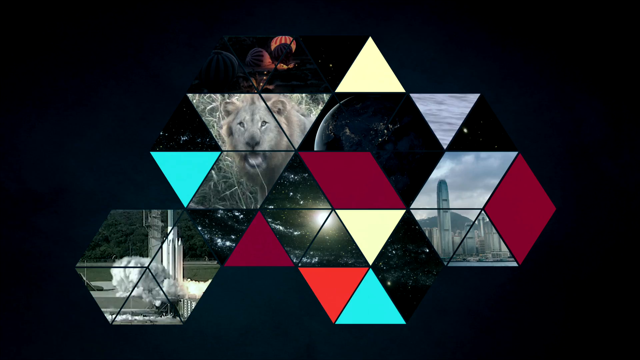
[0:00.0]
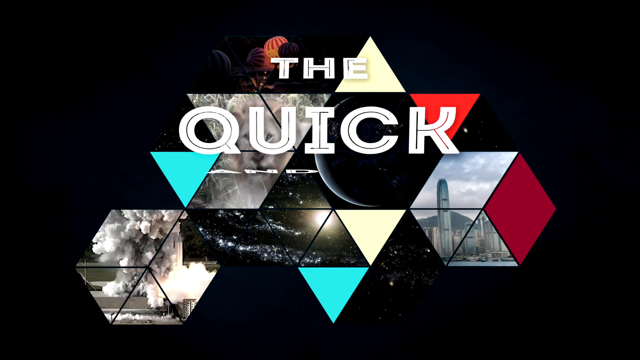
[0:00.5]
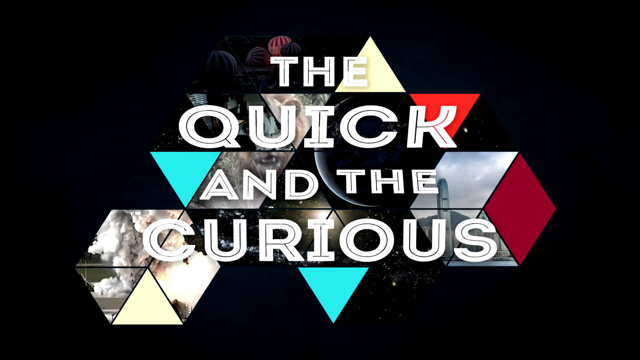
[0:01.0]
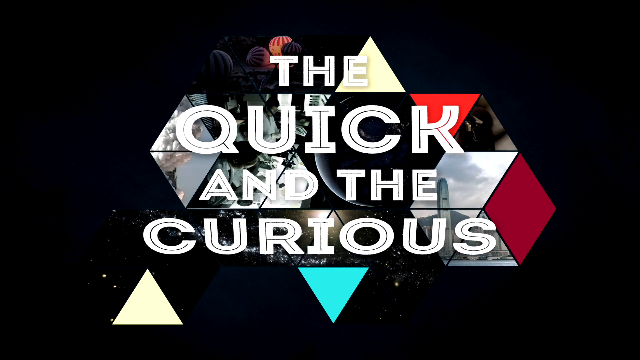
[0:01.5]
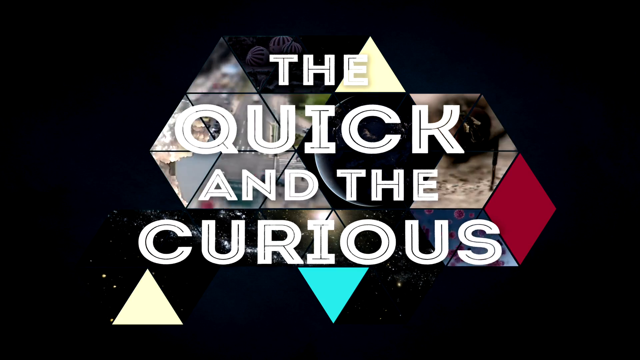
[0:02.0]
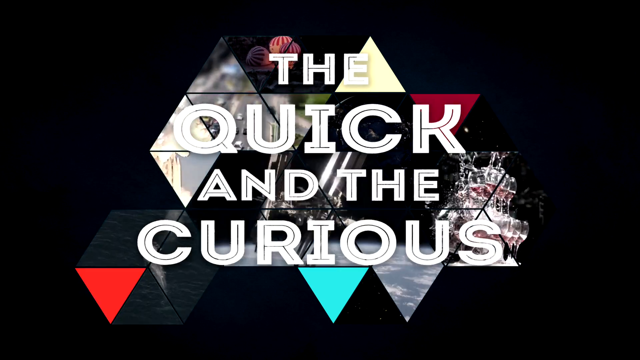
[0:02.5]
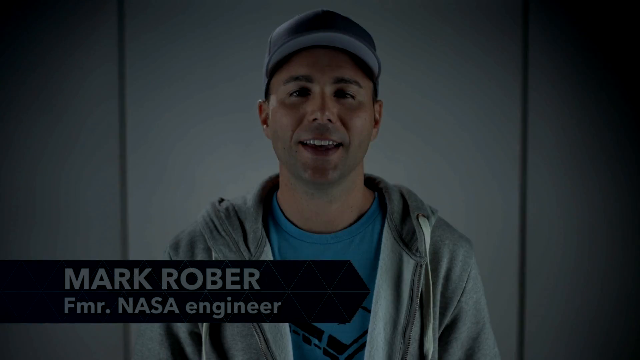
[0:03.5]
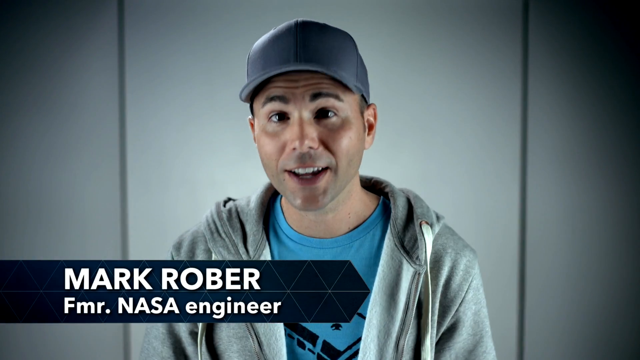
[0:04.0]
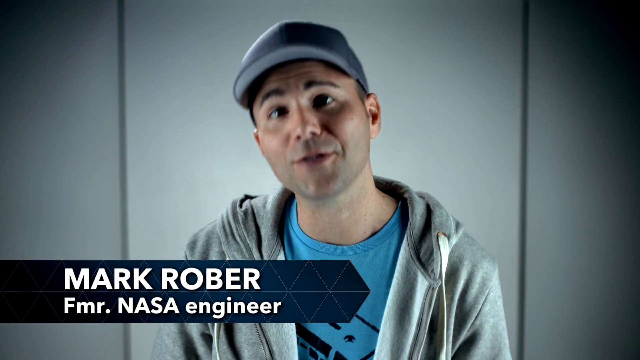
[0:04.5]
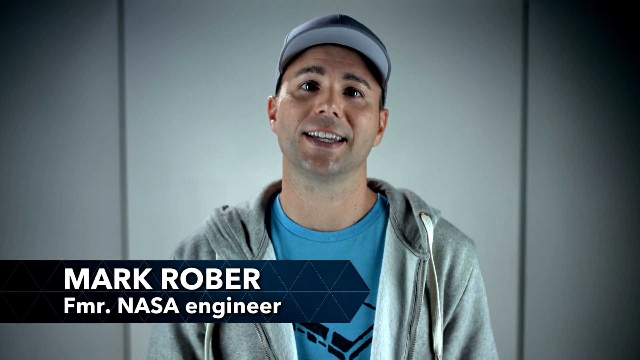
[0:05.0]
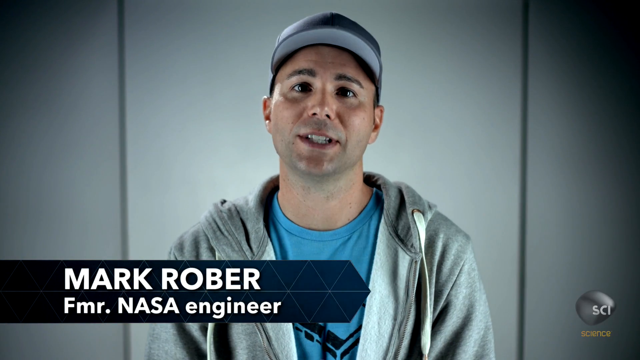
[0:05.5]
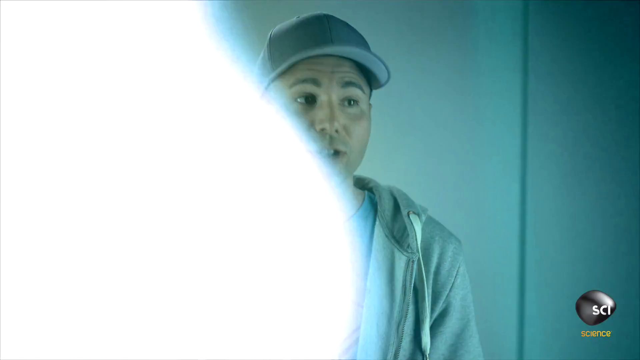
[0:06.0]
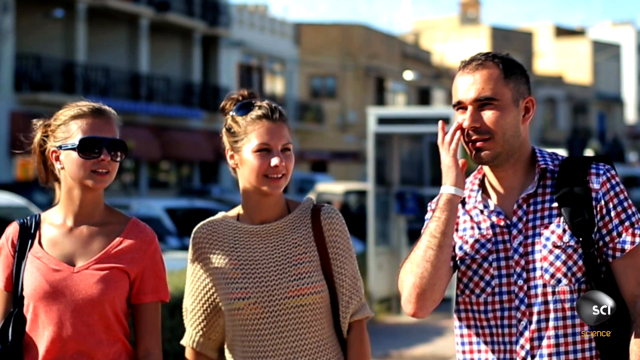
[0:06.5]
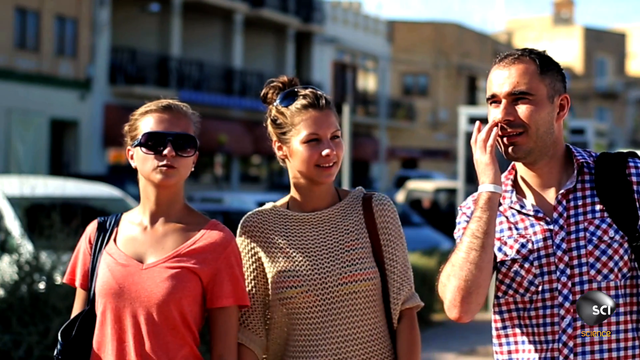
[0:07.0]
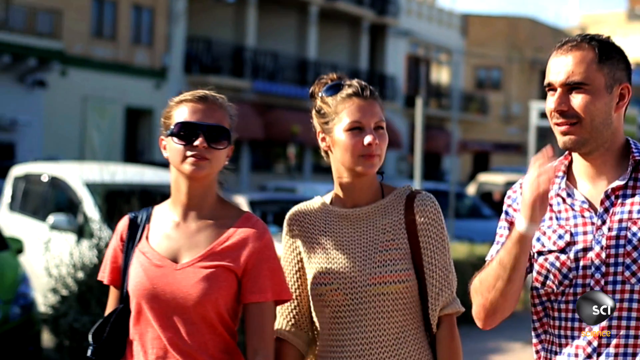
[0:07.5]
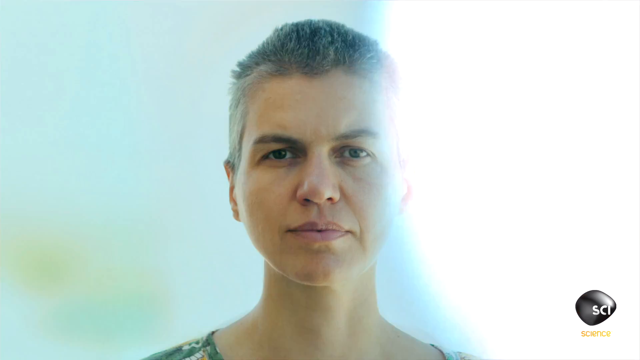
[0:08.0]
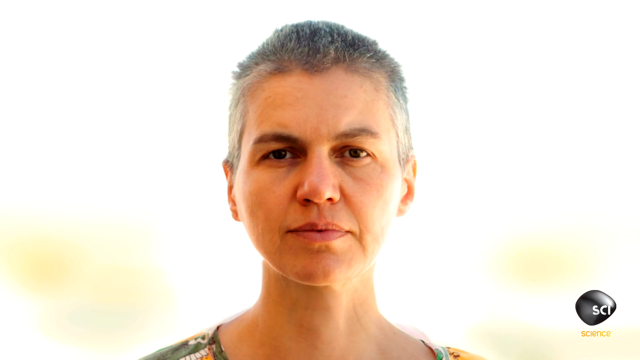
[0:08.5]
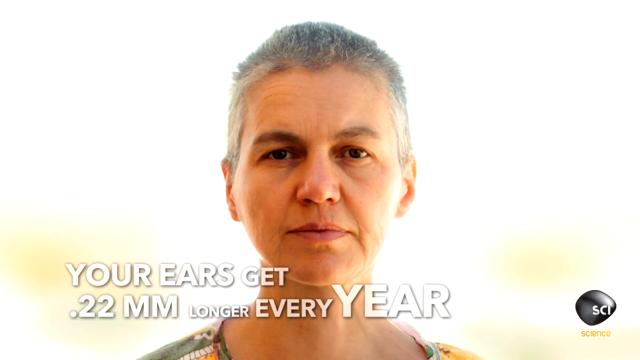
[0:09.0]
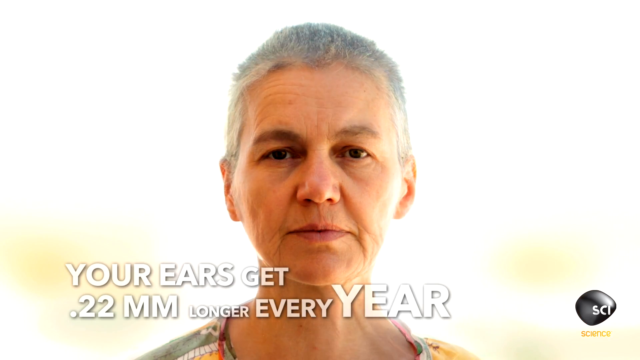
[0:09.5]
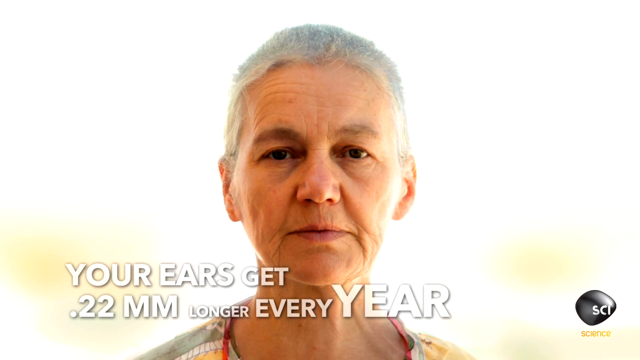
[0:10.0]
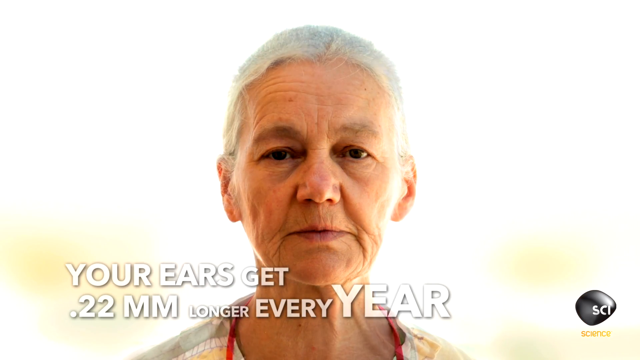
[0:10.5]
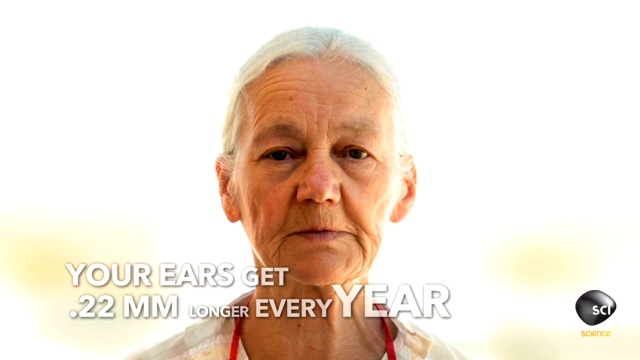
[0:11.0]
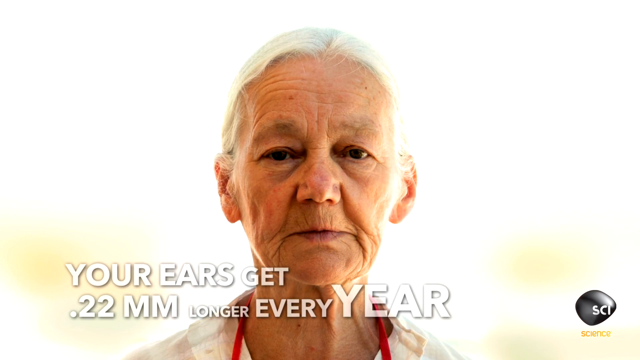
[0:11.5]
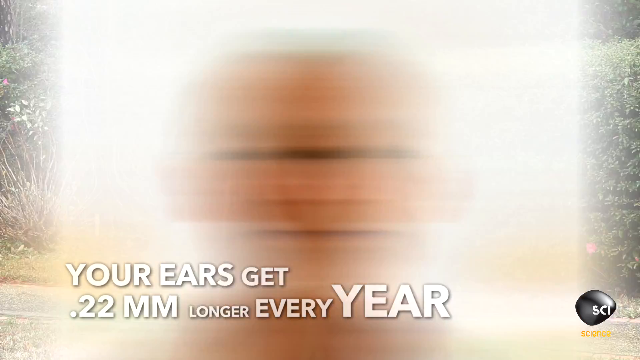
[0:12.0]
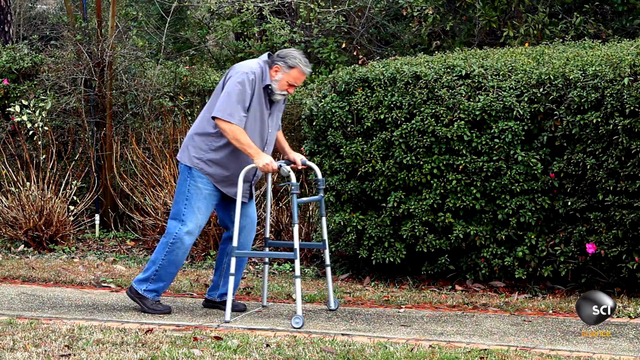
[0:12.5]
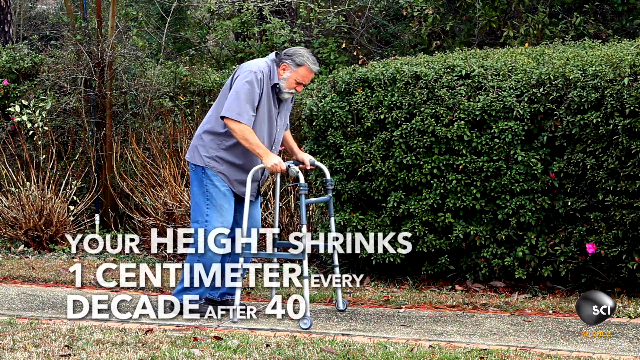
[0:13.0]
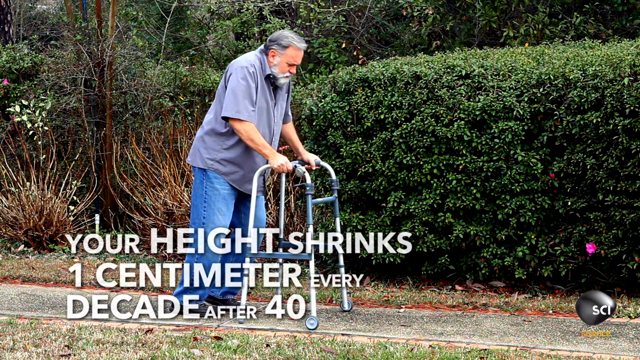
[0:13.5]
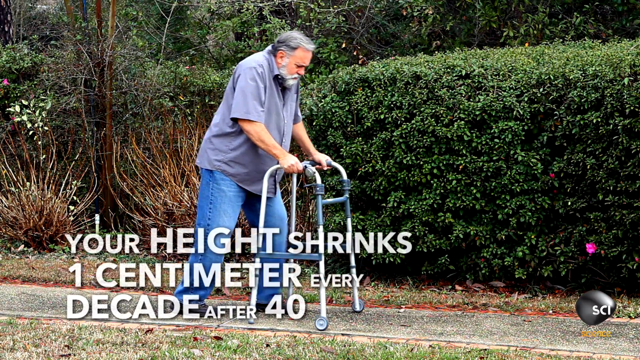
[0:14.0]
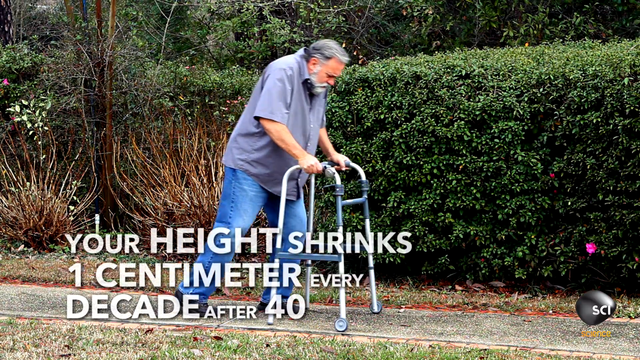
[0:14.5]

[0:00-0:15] The text "the quick and the curious" appears, along with "Mark Rober fmr nasa engineer." Mark wears very casual gray clothing, like a hoodie and a baseball cap, against a gray background. Text reading "Your ears get" a number of millimeters "longer every year" accompanies a woman who seems AI-generated: her face morphs to look older, her ears lengthen, her hair turns gray and she gets wrinkly. A man walking with a walker appears with text beginning "Your height shrinks," about height shrinking one centimeter every decade after 40. Three young people also walk on a street; they do not age and seem unrelated to the two facts.